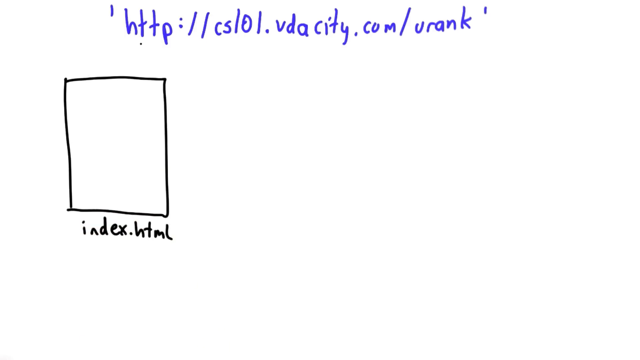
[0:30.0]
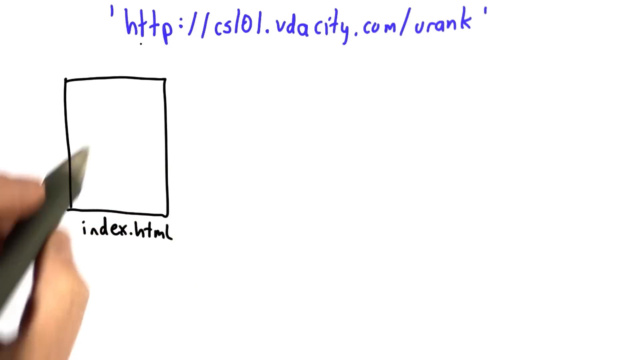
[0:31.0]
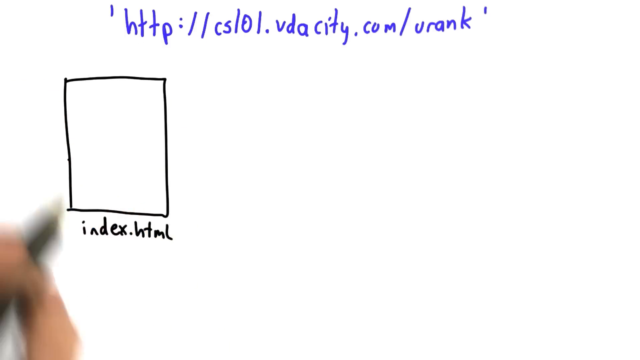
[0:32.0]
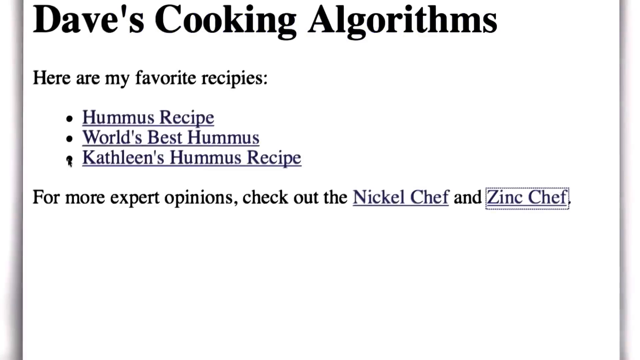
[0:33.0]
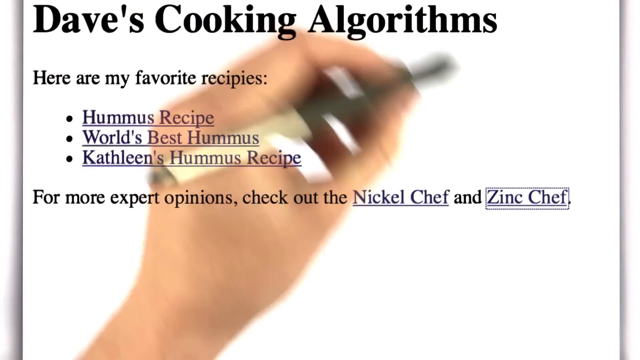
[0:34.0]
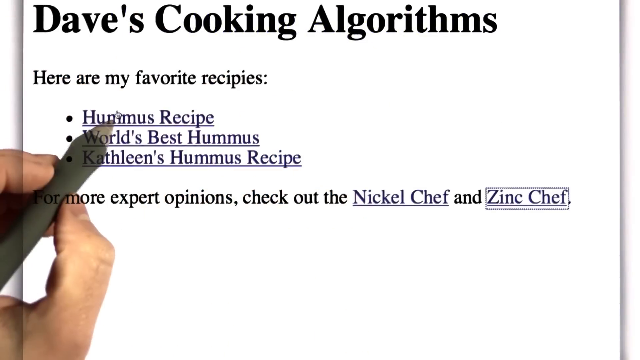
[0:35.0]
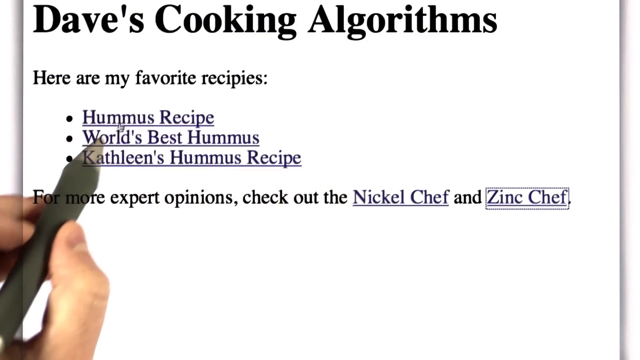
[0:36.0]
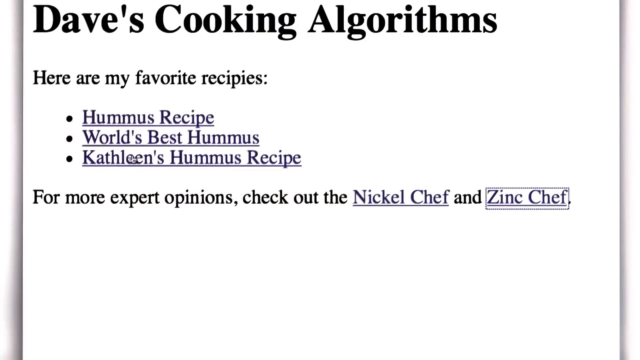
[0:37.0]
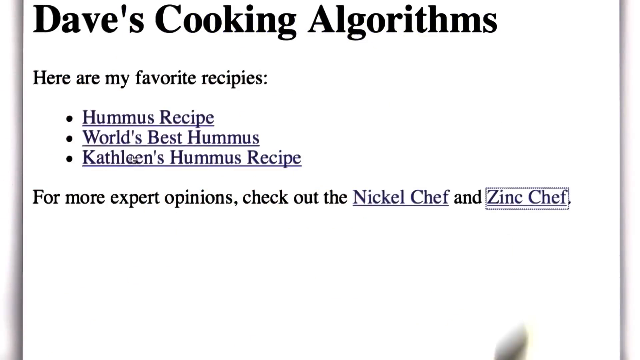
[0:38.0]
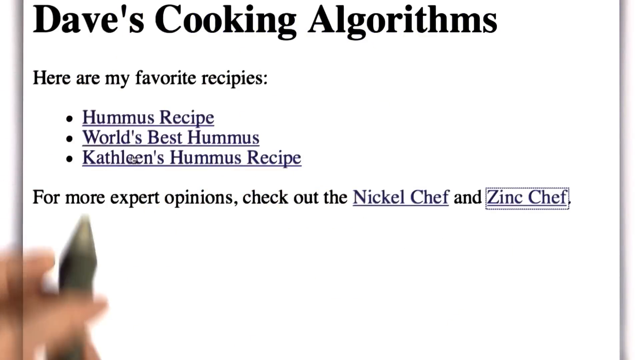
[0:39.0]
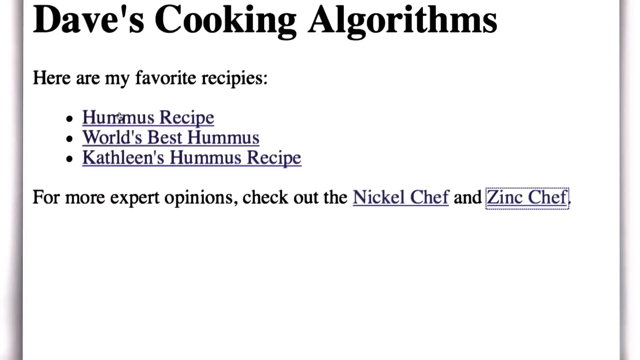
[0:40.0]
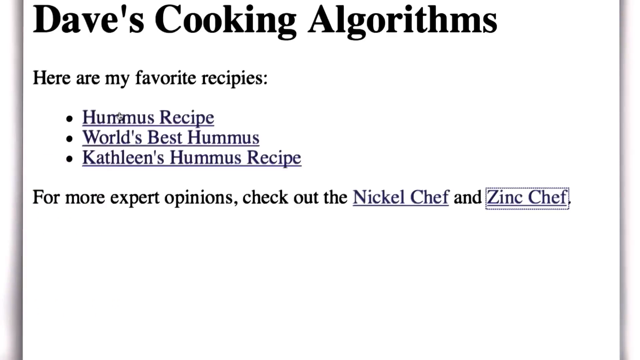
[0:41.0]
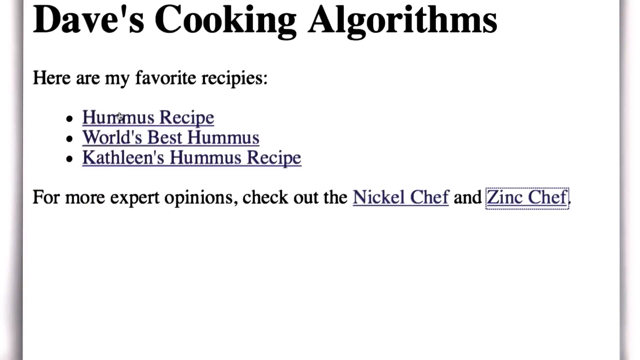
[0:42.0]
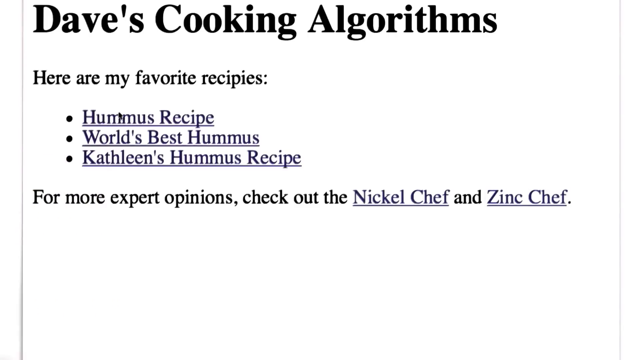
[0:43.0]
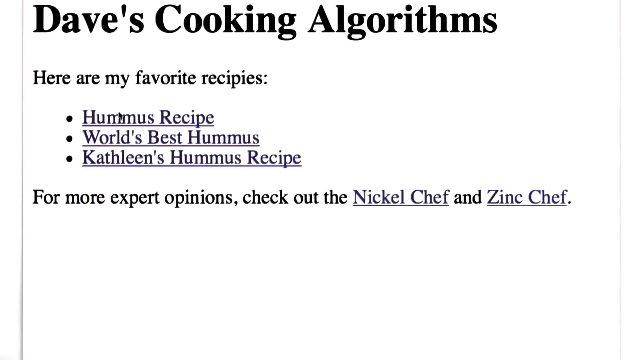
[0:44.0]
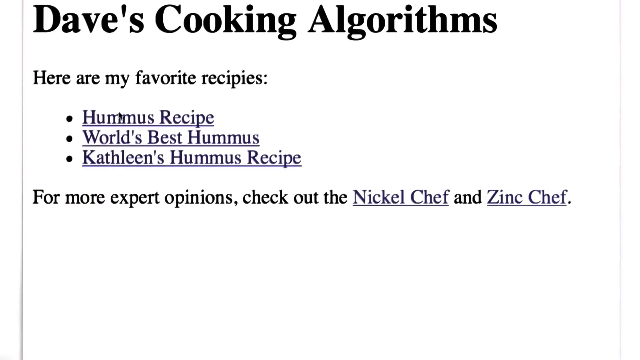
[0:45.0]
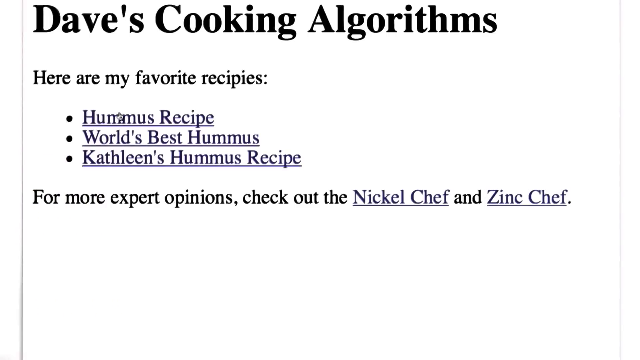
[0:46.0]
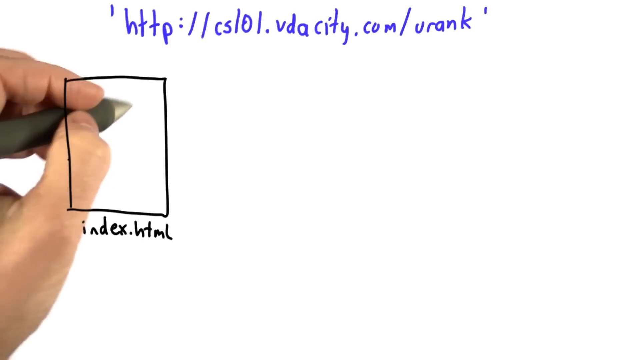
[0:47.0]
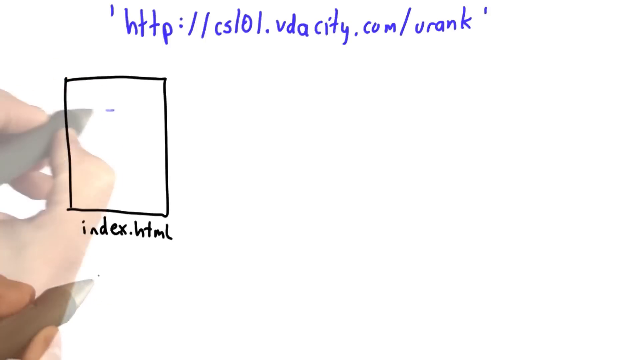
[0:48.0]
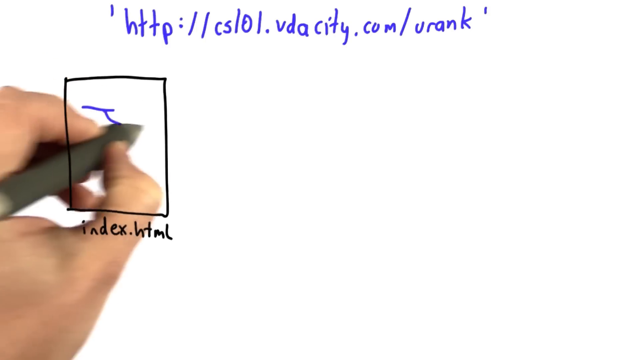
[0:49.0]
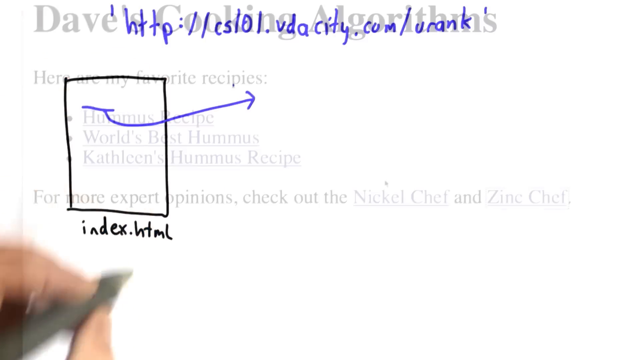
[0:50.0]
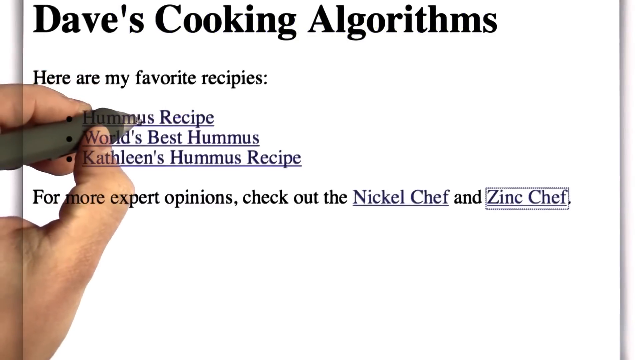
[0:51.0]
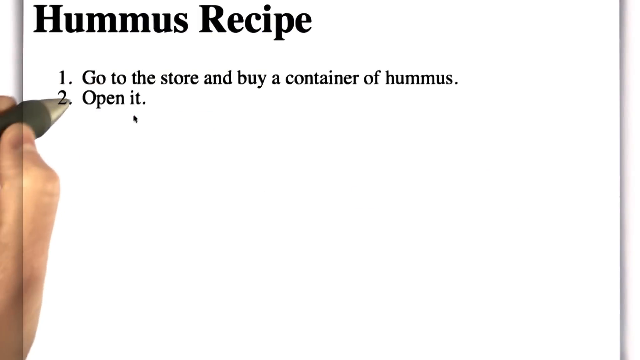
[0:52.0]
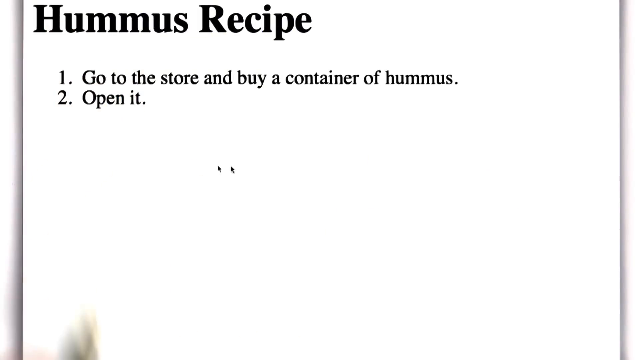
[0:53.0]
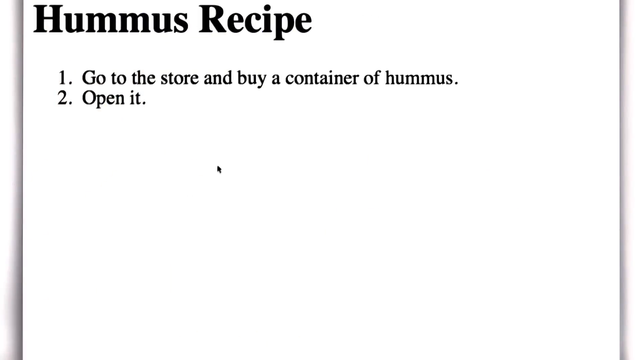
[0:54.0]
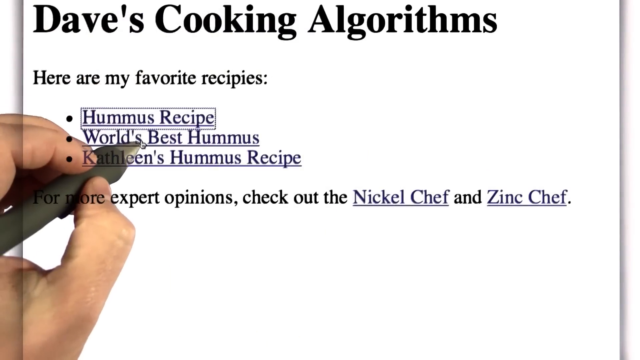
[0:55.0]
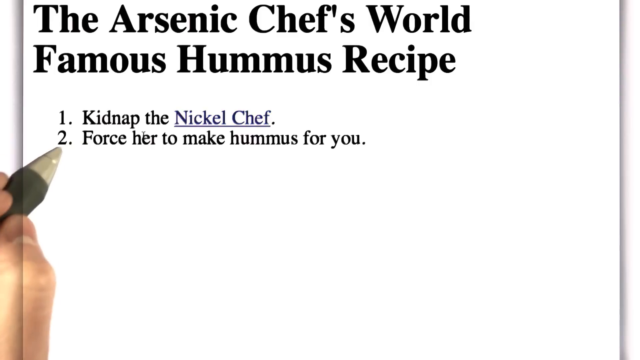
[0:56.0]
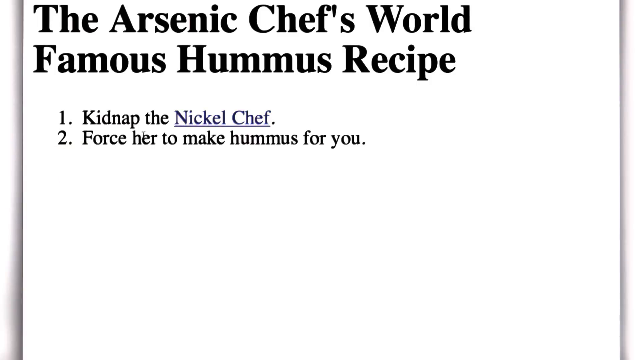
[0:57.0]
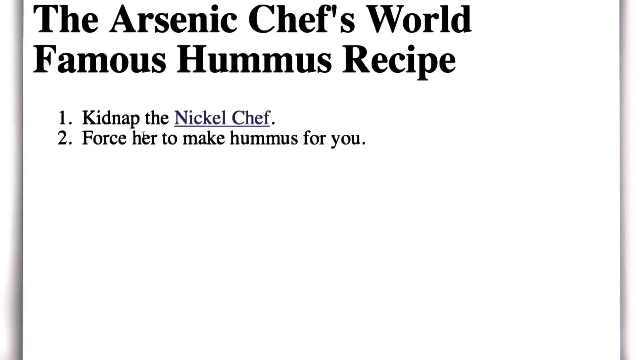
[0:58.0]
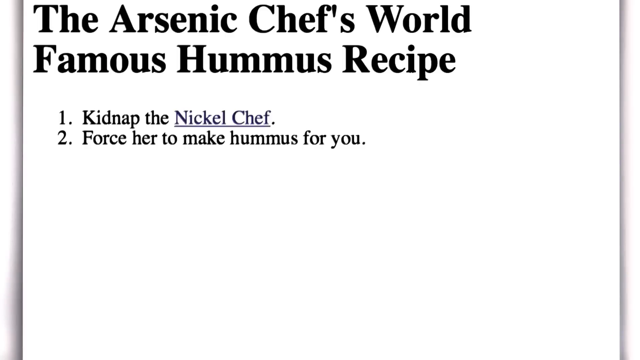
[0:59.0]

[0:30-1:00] "http" is written on the screen, along with an index that has a box on top of it. The person continues explaining, and text reads "dave's cooking algorithm here are some favorite recipes". The view then goes back to the index, and the person demonstrates what is written on the other side, apparently creating a graph.